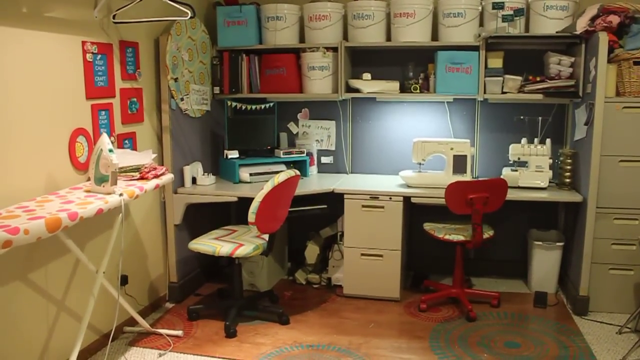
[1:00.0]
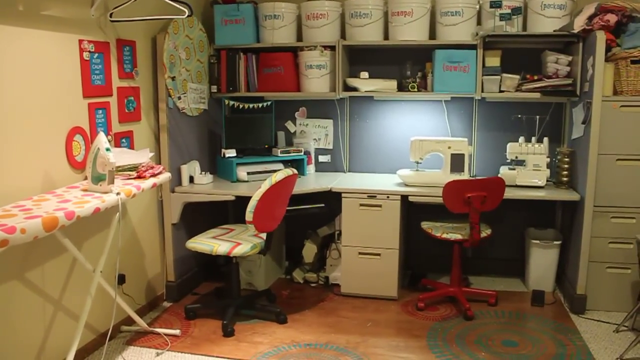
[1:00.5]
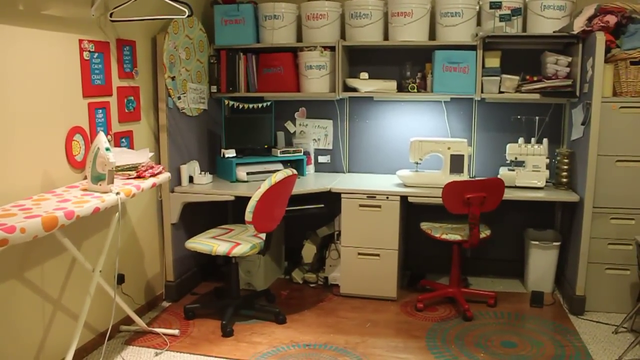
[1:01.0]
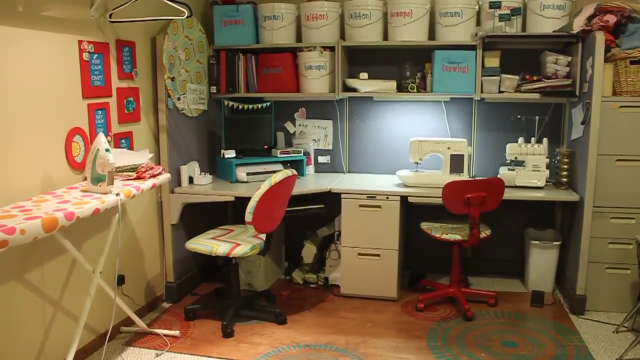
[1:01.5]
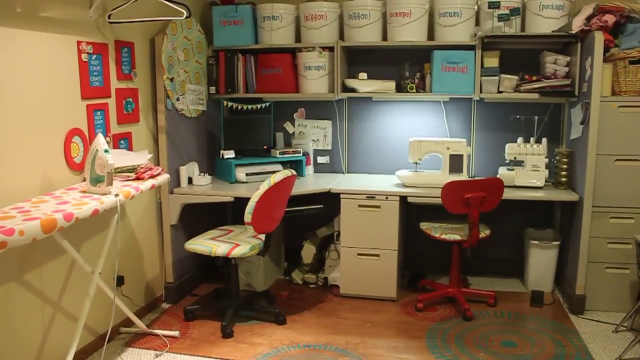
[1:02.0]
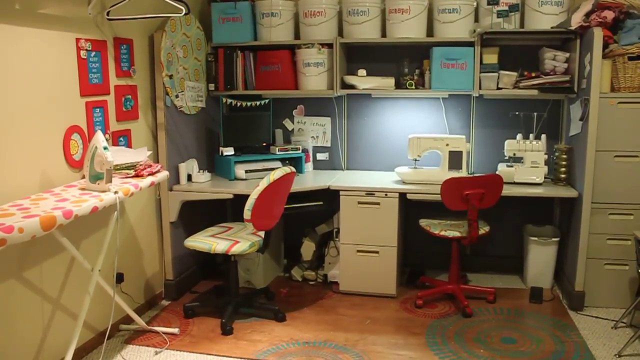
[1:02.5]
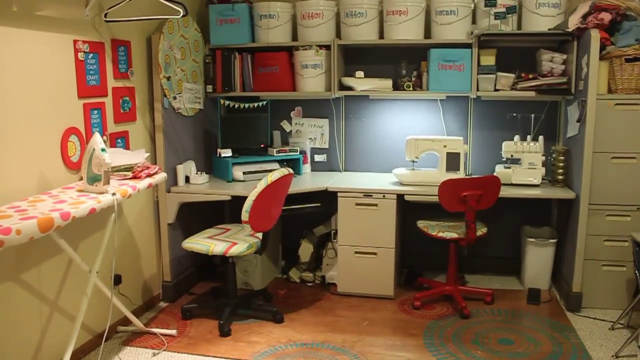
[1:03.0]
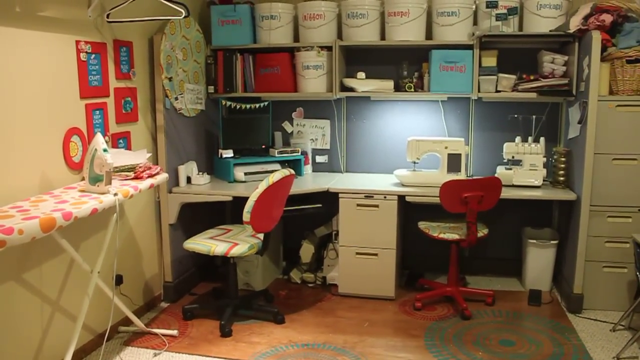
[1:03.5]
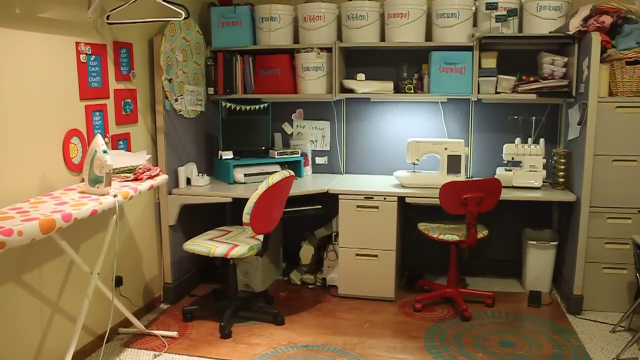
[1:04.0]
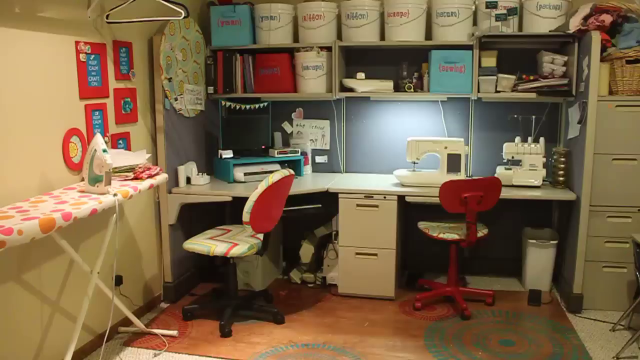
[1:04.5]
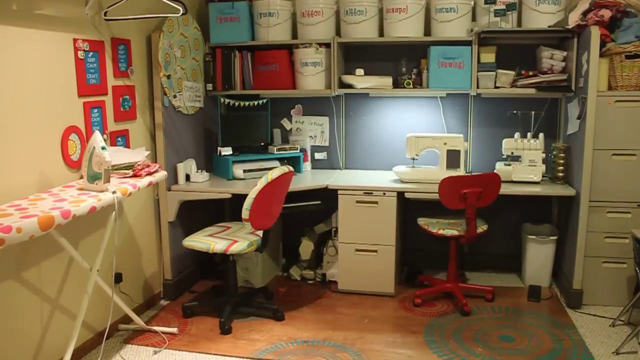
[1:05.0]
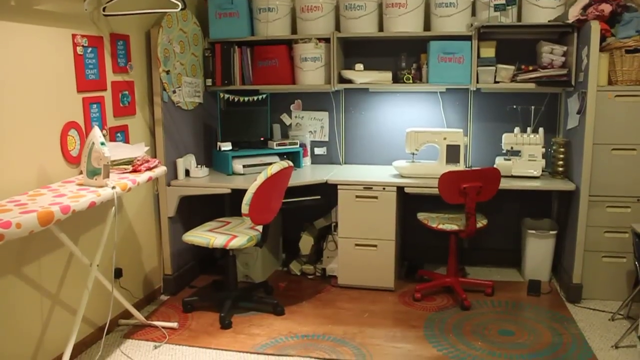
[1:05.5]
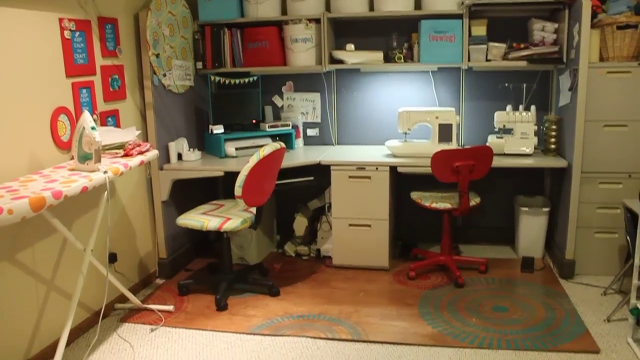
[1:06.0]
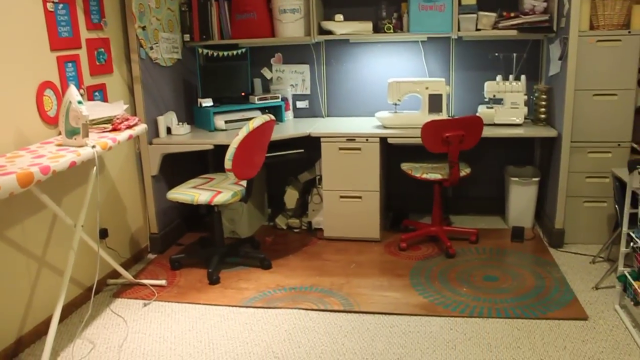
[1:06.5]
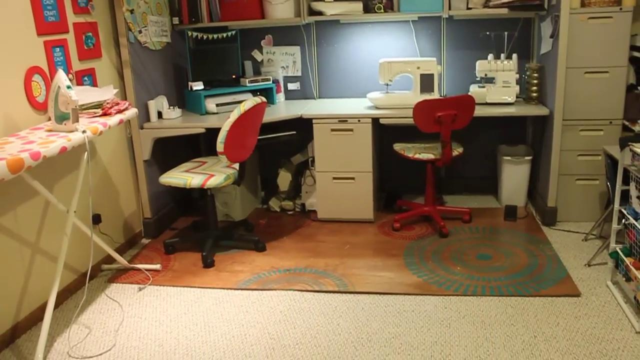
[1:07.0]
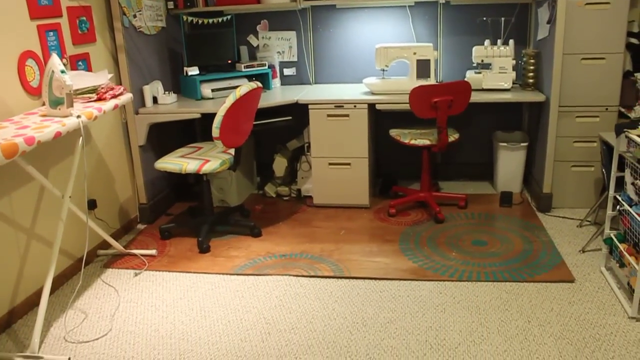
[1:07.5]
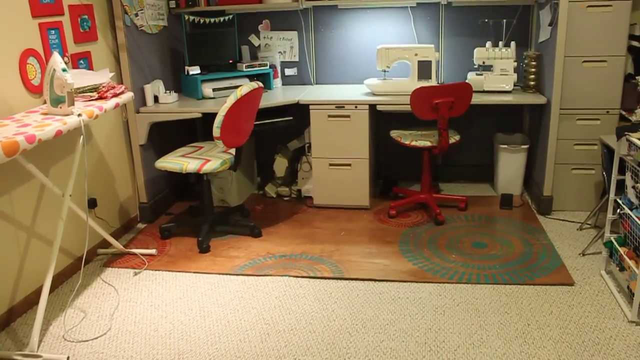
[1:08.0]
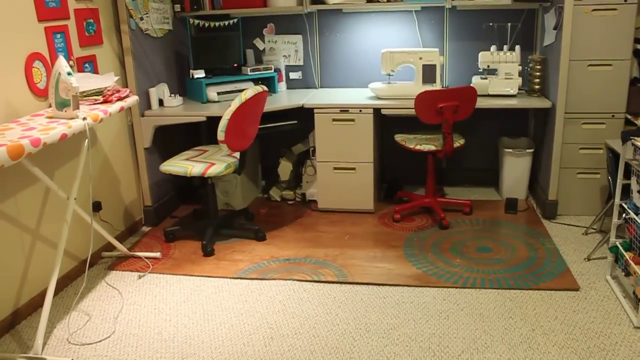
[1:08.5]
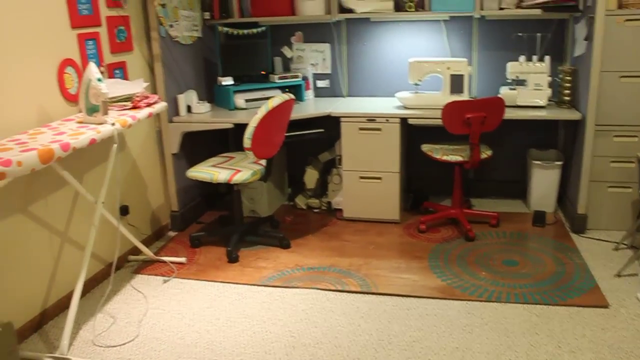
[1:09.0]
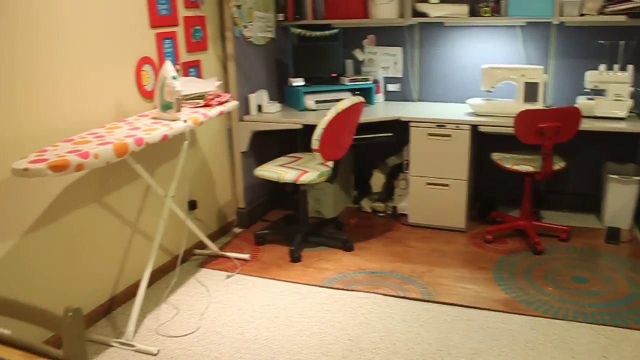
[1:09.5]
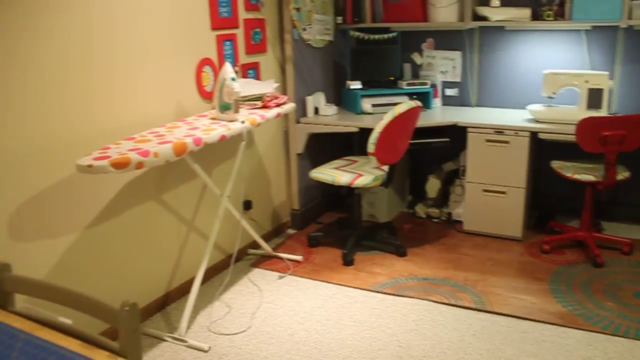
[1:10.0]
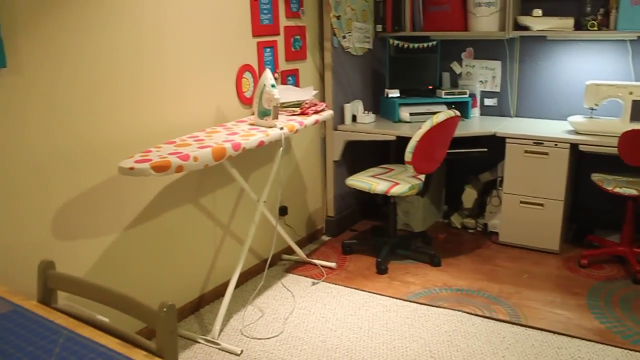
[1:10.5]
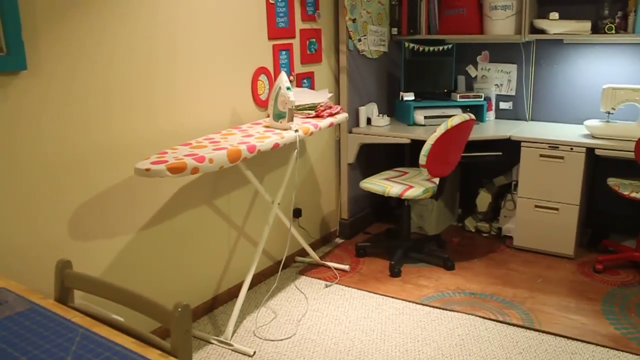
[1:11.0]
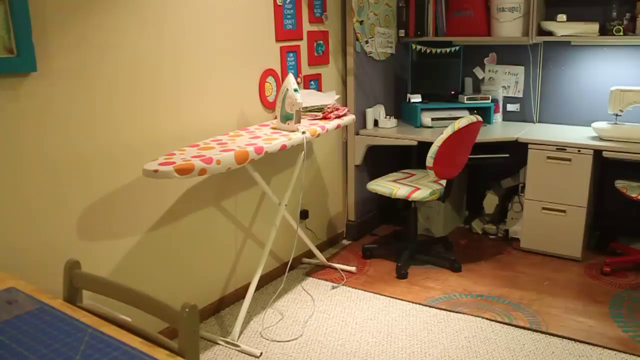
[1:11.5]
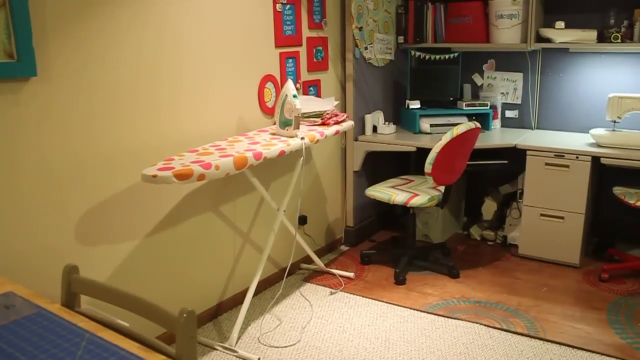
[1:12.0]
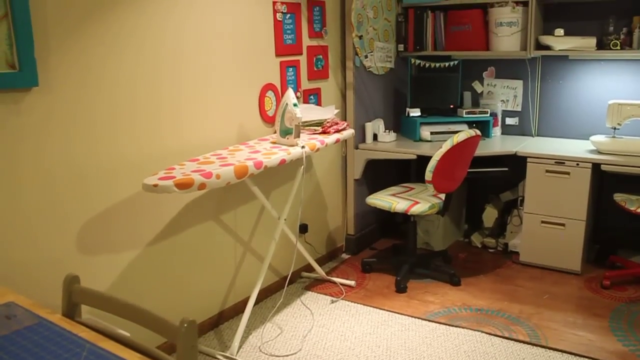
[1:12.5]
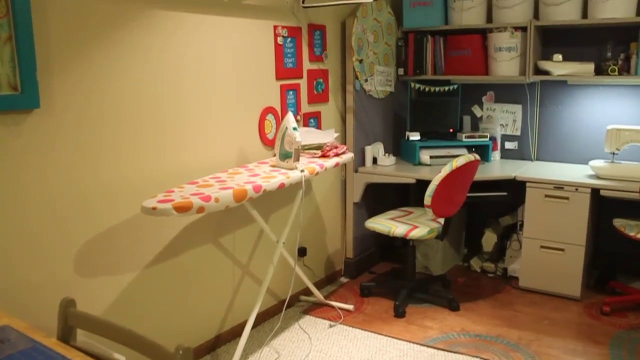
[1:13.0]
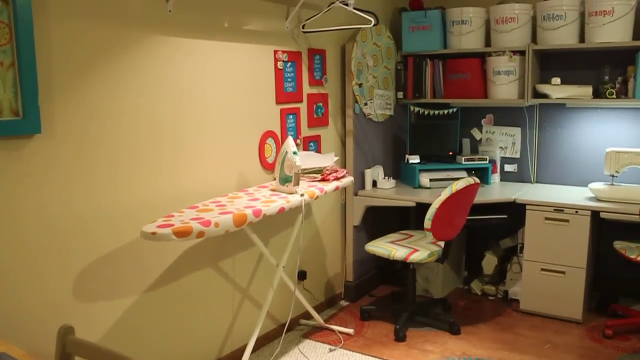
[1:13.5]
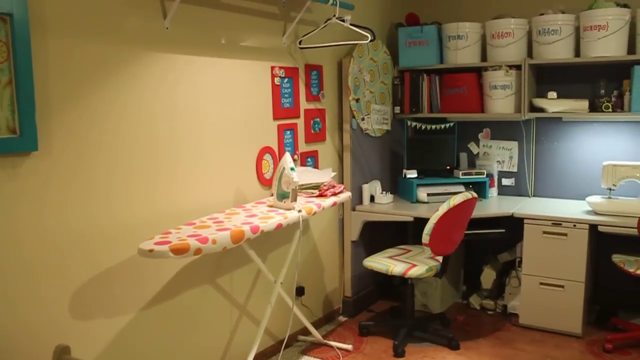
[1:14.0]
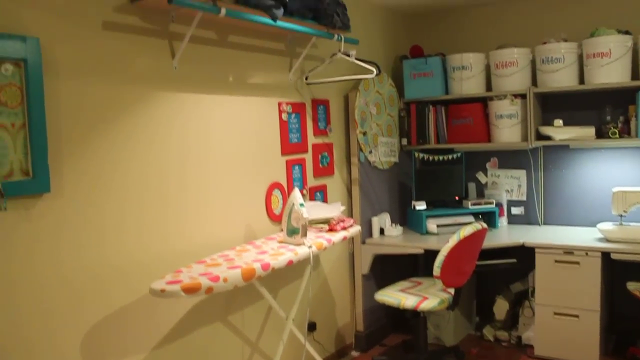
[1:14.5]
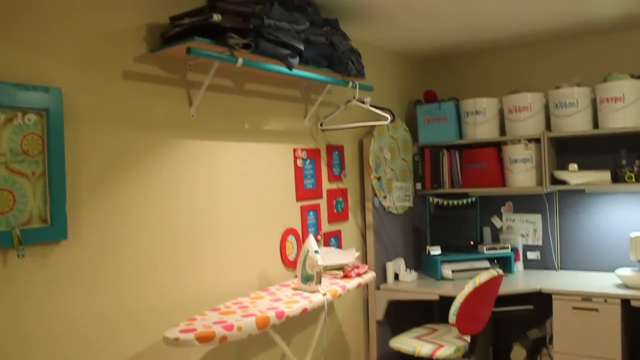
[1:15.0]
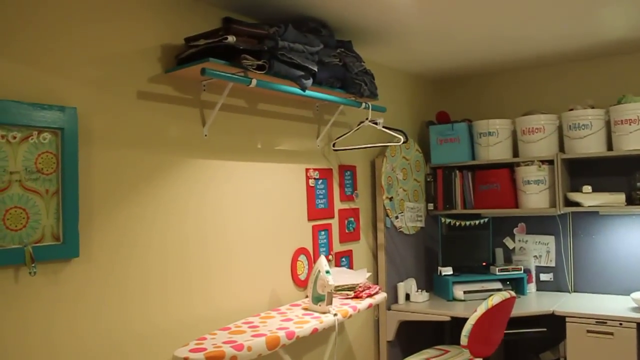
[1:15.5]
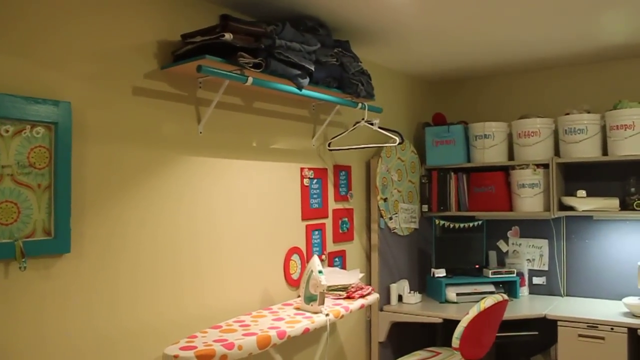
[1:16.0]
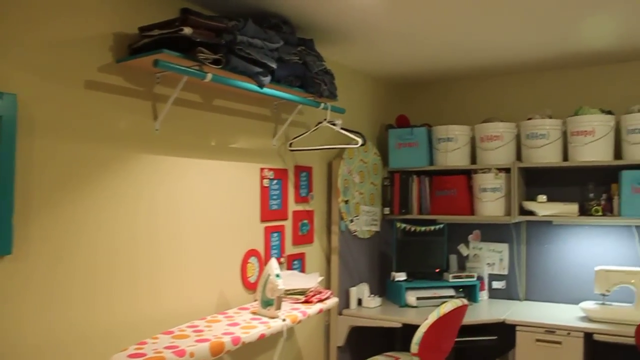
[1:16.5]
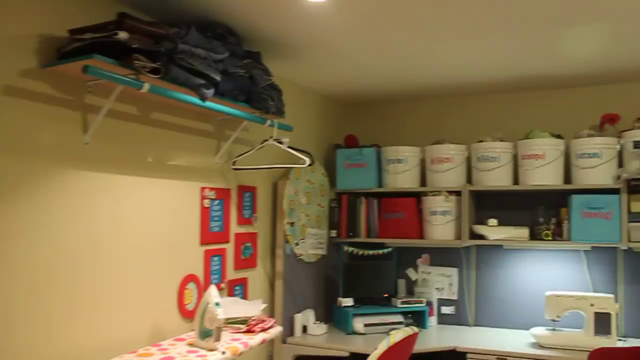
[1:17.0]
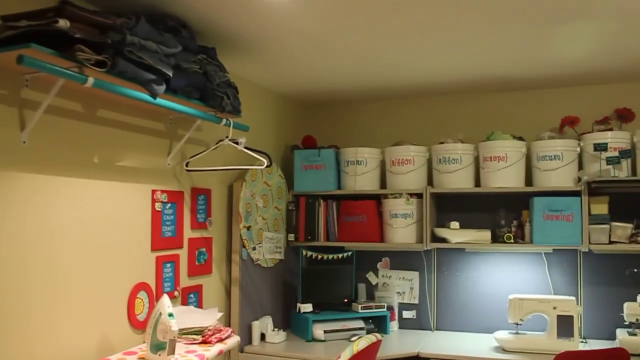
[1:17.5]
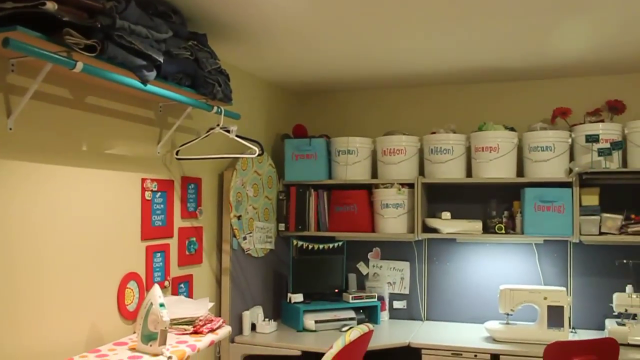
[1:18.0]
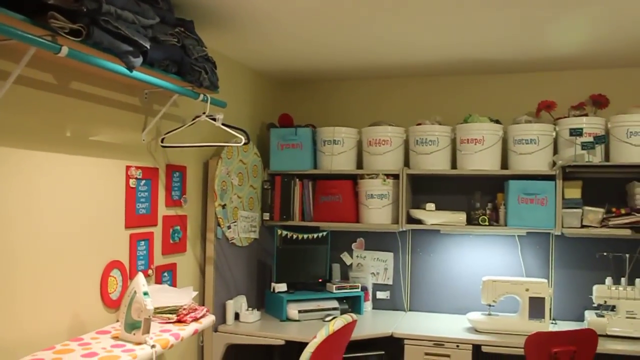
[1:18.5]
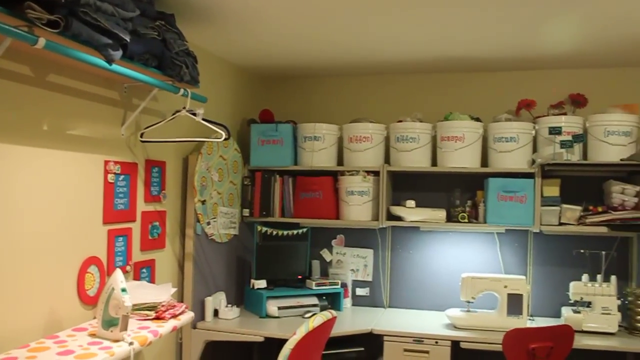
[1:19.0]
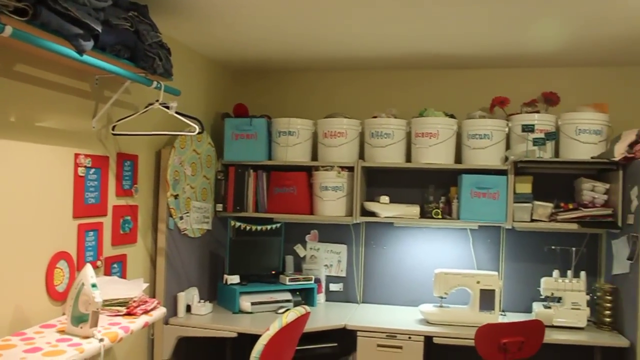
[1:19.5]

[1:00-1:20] The shot shows the back of the room, which has an enormous white desk. The wall the desk is attached to appears to be blue. On top of the desk there are various shelves. The topmost shelves have seven baskets and one blue box on the left; the buckets are all white, have words written on them, and appear to be filled with materials. Below that shelf are three small cubicles, all filled with various buckets, boxes and random materials thrown about. A sewing machine is on top of the desk. There are two chairs: one is red with a white cushion, and the chair to its left has a red back and white cushions with fun patterns. Under the desk there is a trash bin. To the right of the desk is a filing cabinet with a basket on top.